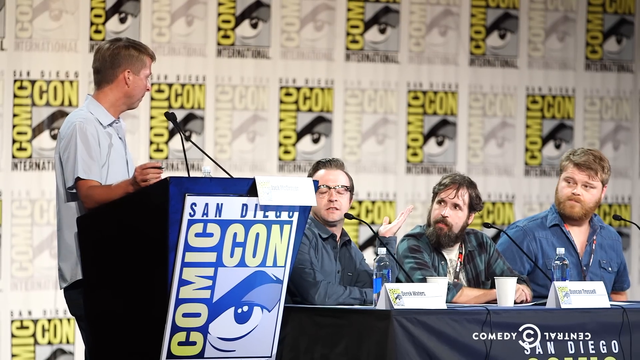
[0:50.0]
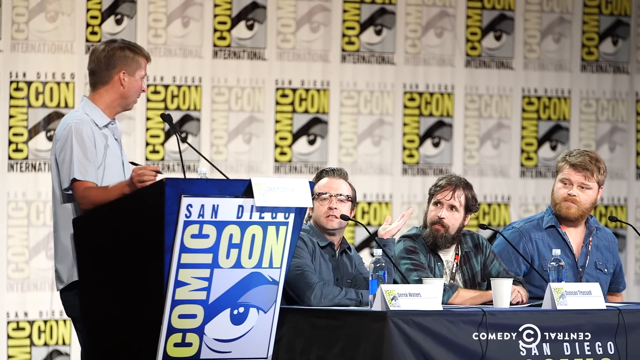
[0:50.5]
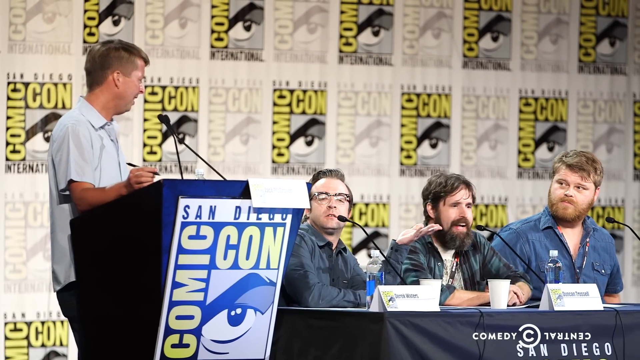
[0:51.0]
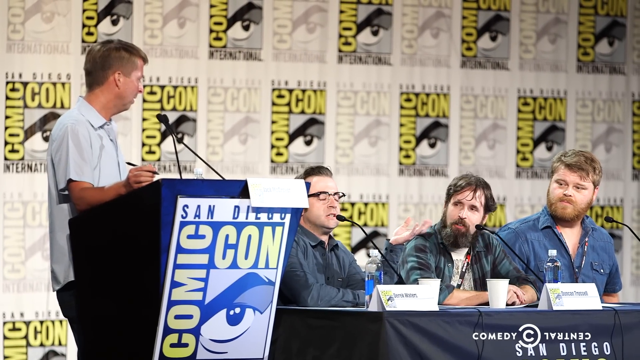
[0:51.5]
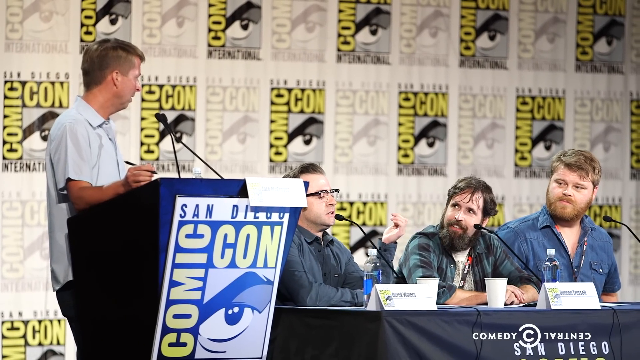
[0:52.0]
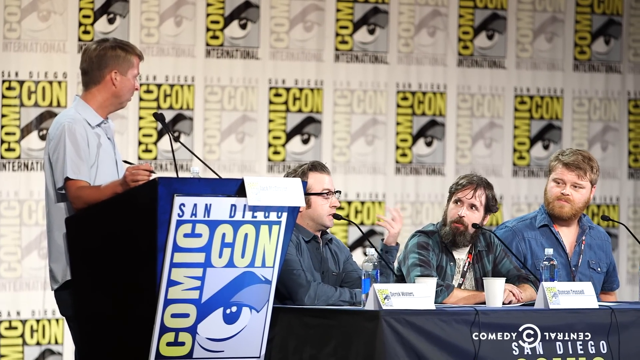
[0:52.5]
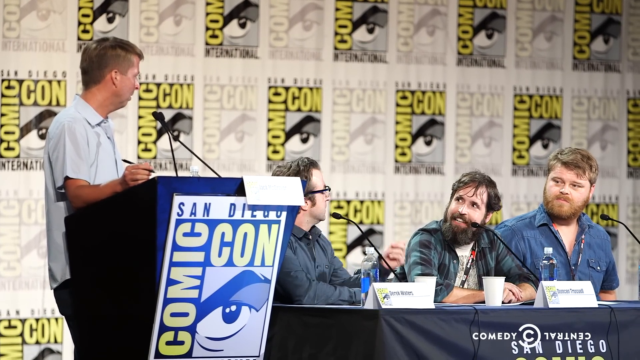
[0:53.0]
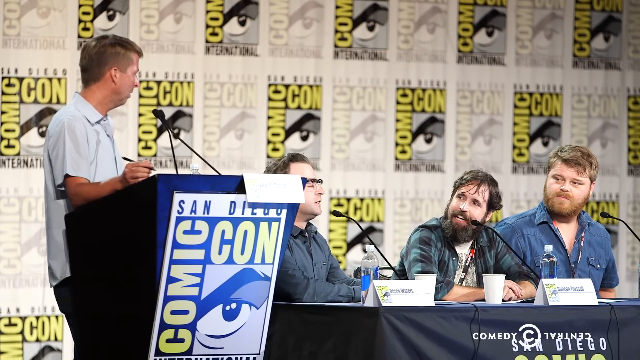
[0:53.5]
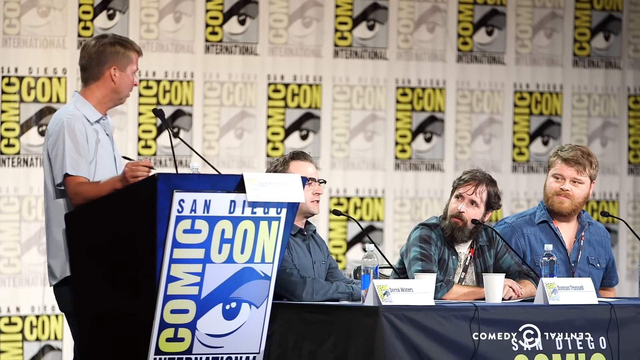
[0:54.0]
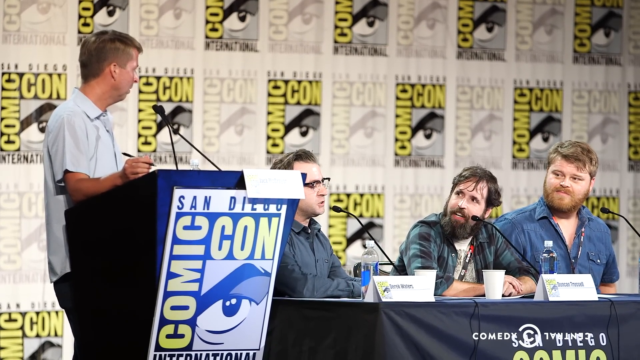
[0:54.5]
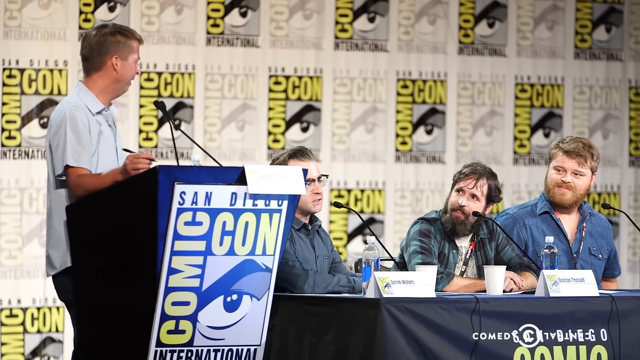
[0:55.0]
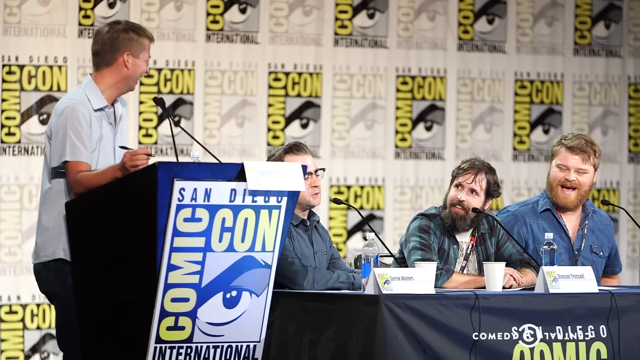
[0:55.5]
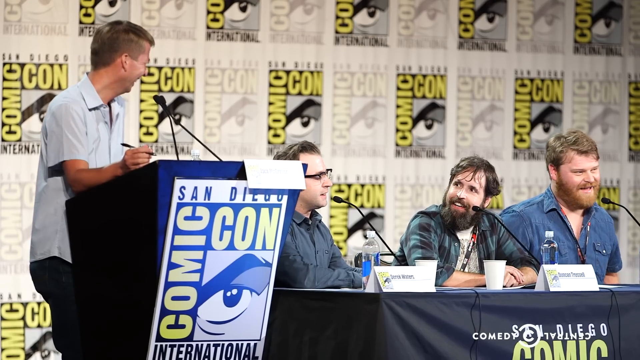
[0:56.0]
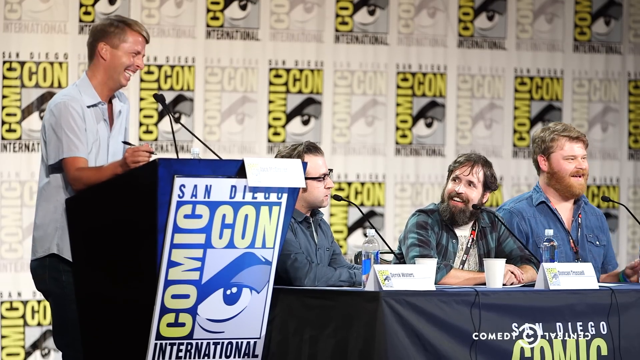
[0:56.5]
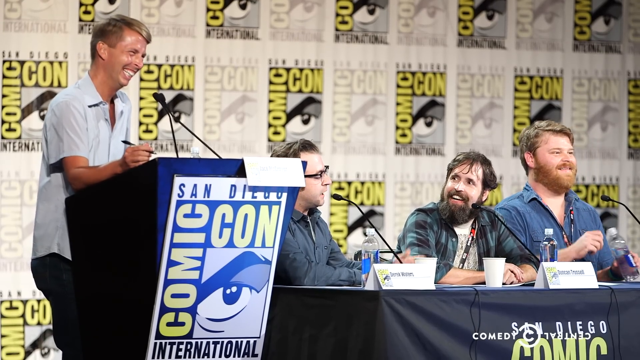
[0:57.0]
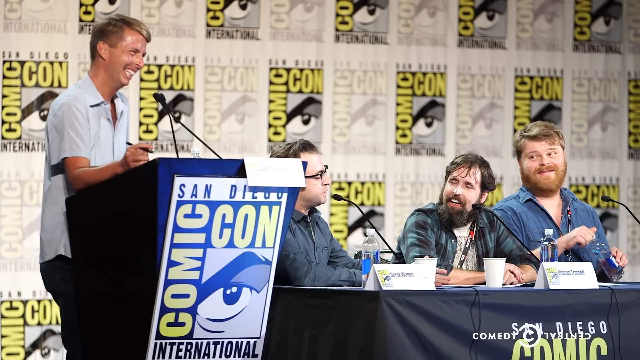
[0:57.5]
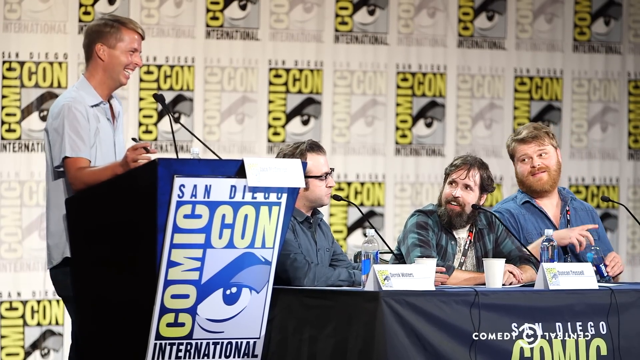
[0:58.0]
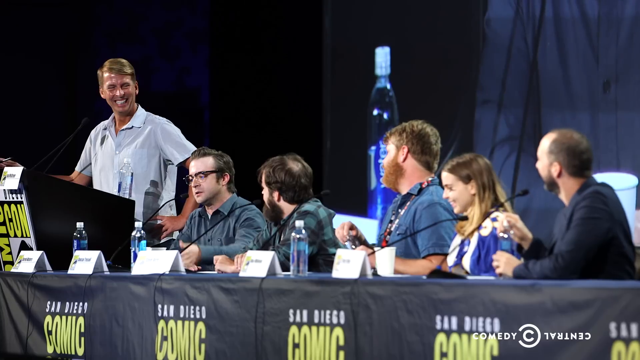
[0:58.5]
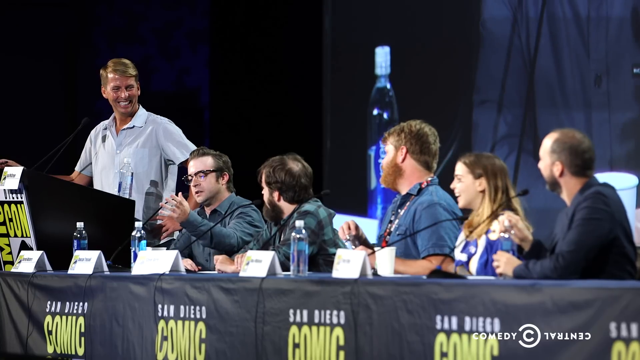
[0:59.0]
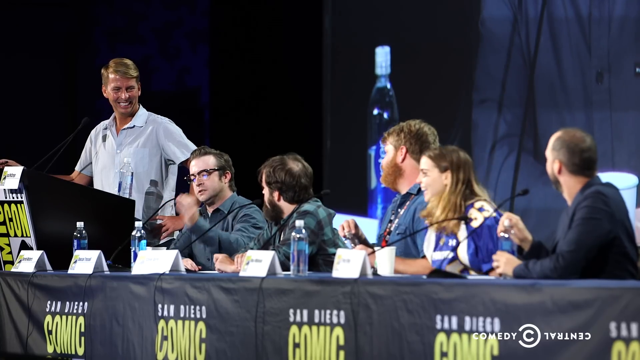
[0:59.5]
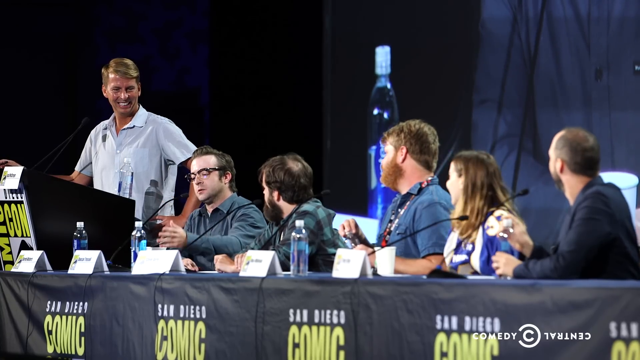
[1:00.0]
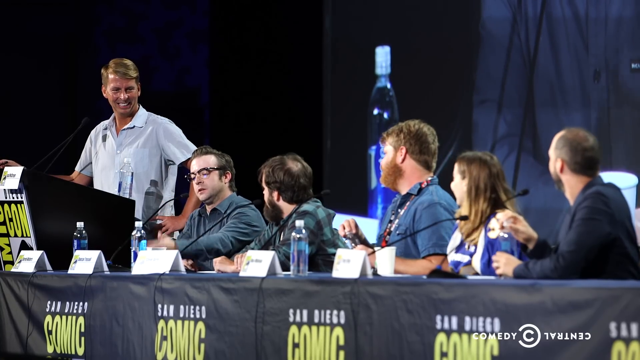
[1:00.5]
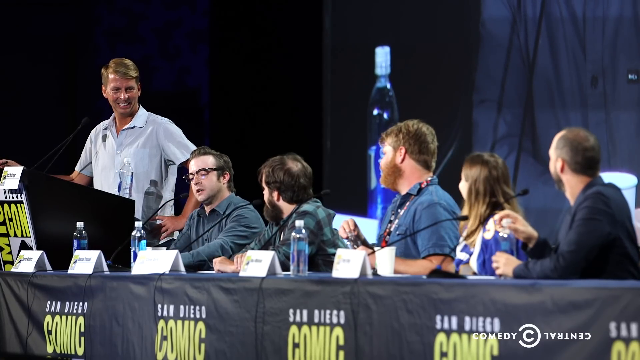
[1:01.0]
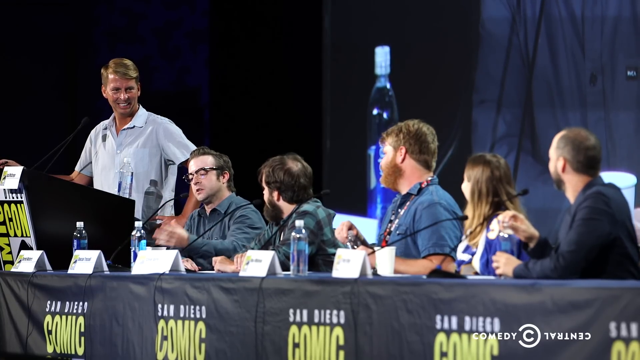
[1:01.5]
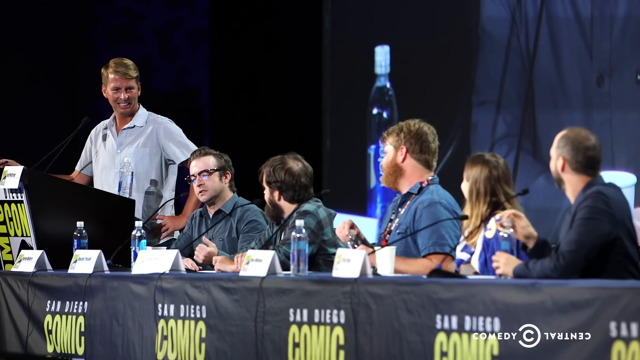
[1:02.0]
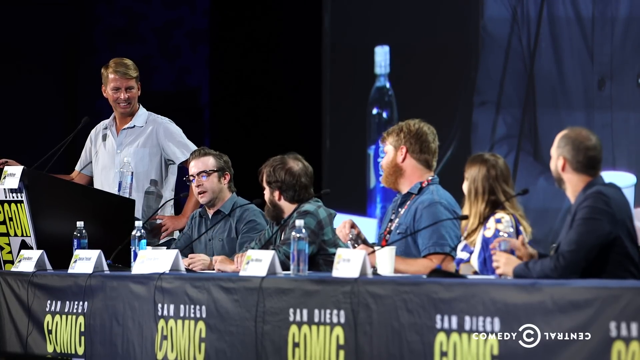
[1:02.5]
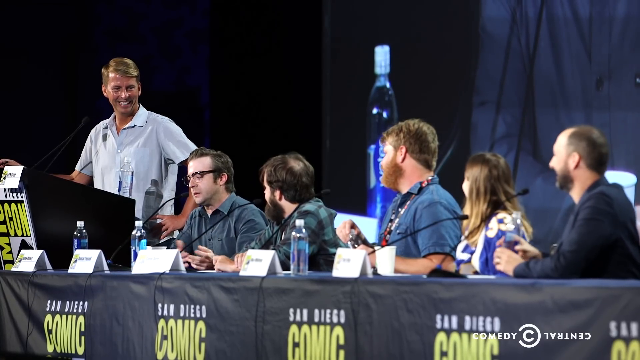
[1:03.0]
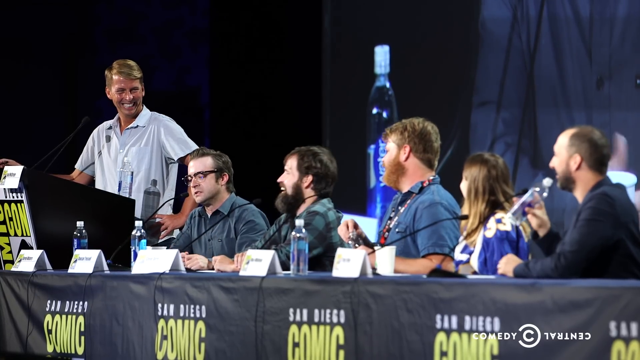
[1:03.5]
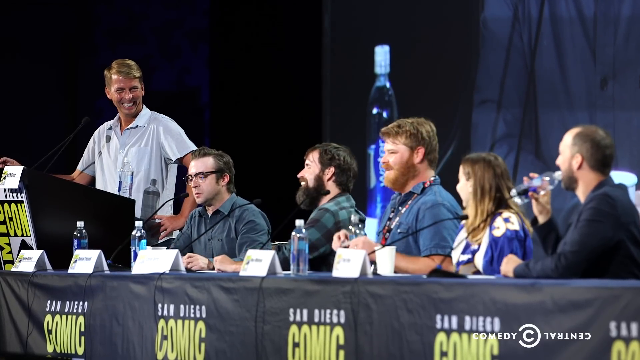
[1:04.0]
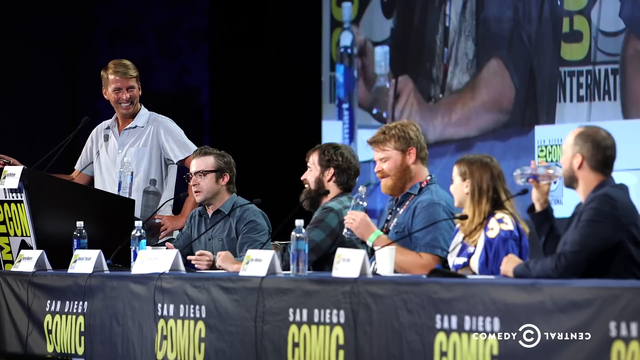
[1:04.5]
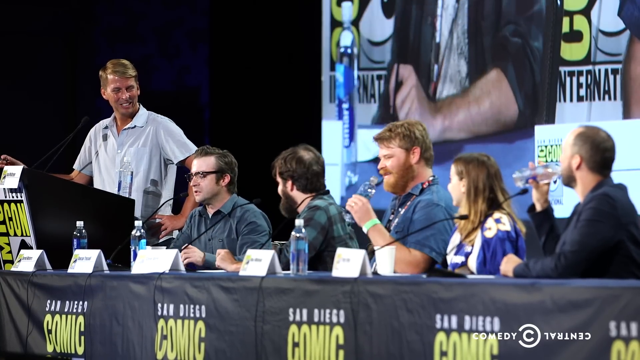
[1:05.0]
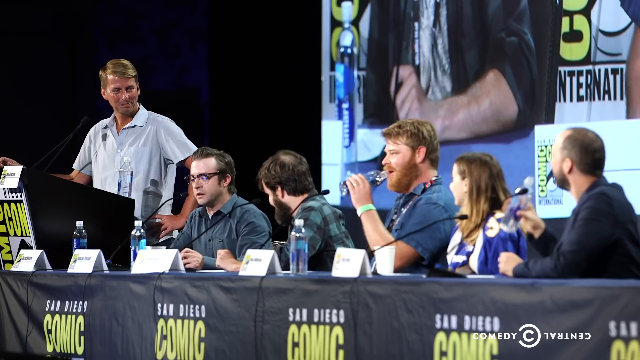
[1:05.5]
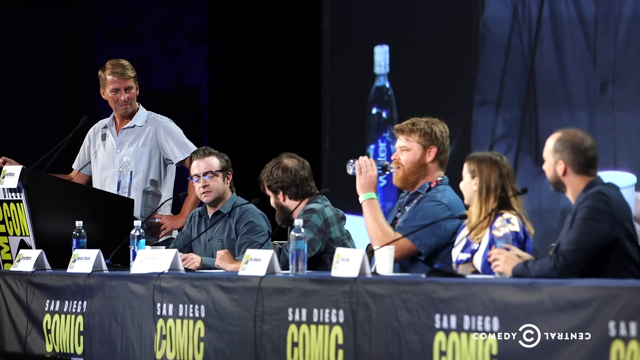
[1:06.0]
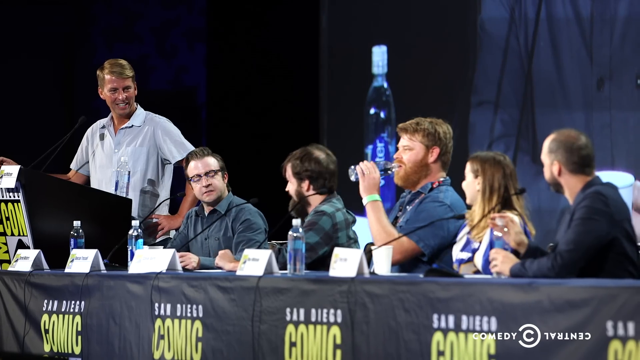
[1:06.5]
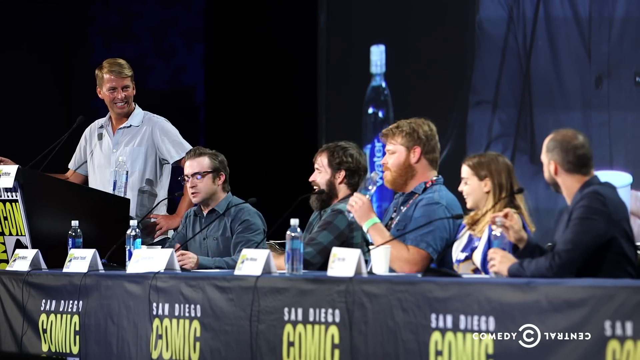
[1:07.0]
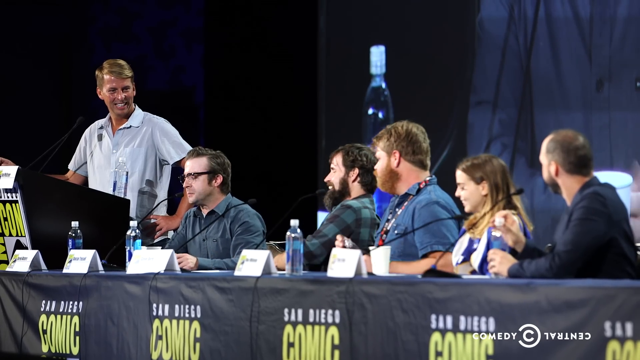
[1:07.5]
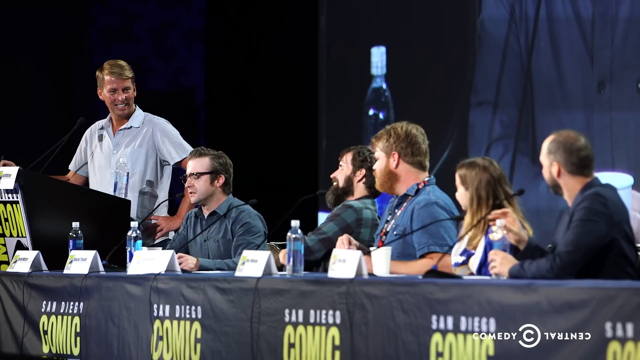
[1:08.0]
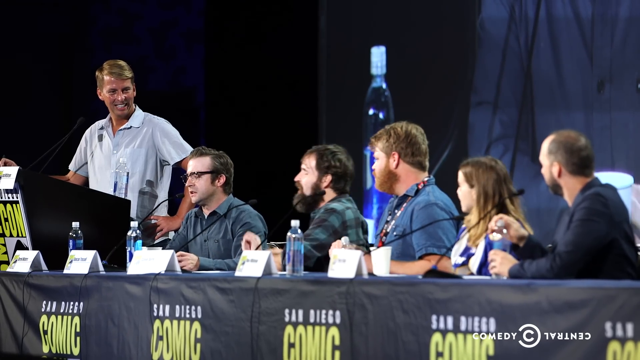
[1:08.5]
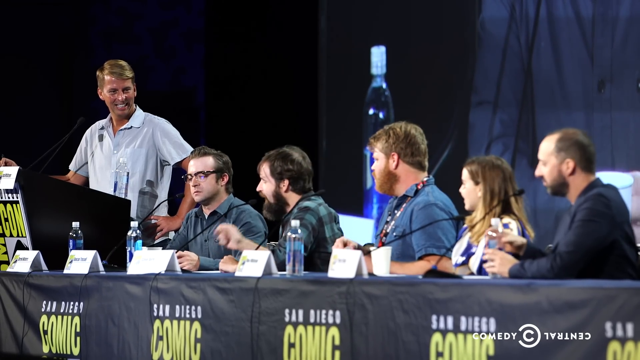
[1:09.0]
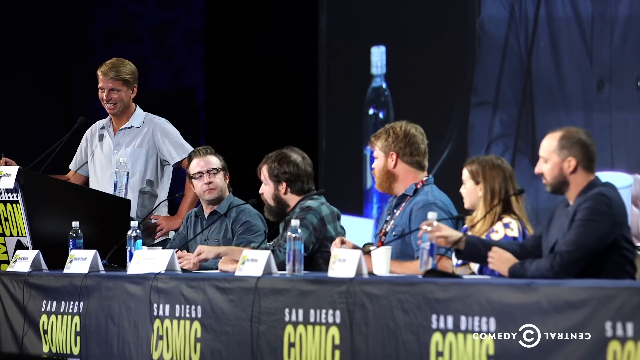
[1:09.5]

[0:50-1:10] The shot comes in at a left-forward angle showing Kenneth on the left side and the three men closest to him, then pans over to the right side, where all of the people are seen sitting and Kenneth is still standing. It stays on this angle for quite a while, then cuts back to the first front angle from the left, showing three people and Kenneth on the left side. The man with the big beard, the second seated person from the left, is talking; he looks up at Kenneth as he talks, and the man to his left looks at him. Everybody starts laughing, and even Kenneth laughs really hard as he looks out at the crowd. Kenneth has blonde hair and a light blue short-sleeved button-up shirt; his right arm rests on the podium in front of him, his left hand is on his hip, and he has a pen in his right hand. The man with the big beard is apparently Duncan Trestle. In the bottom right corner is the Comedy Central logo, with "comedy" in a half shape like a backwards C, a smaller C inside it, and "central" upside down and backwards.